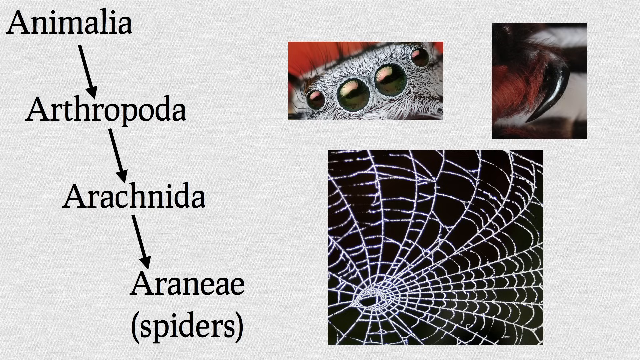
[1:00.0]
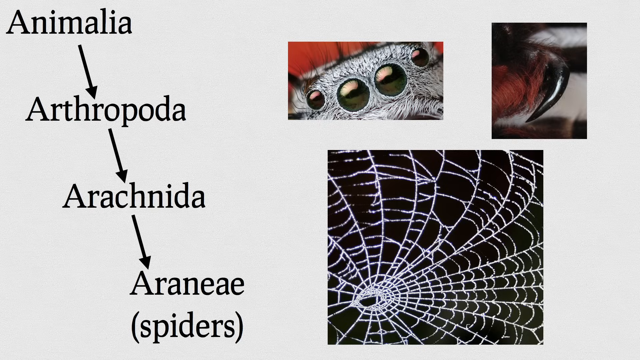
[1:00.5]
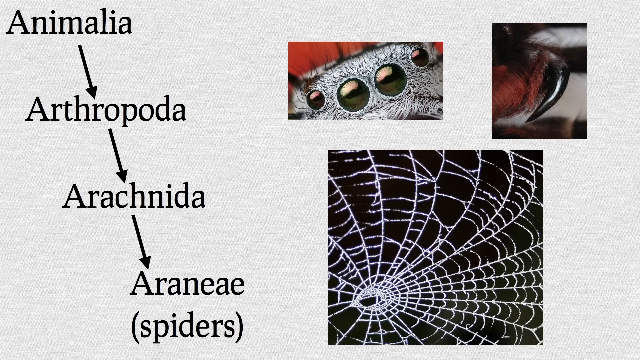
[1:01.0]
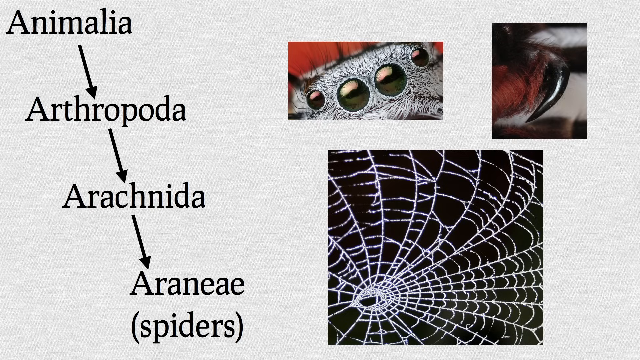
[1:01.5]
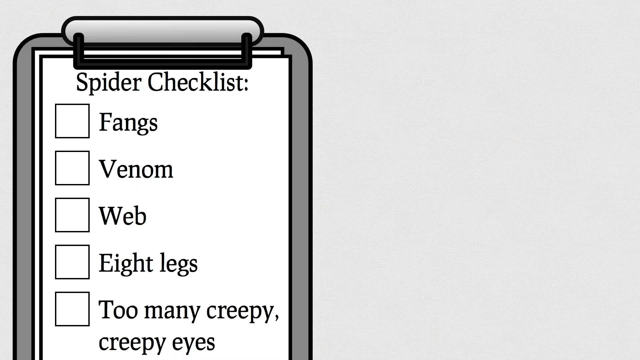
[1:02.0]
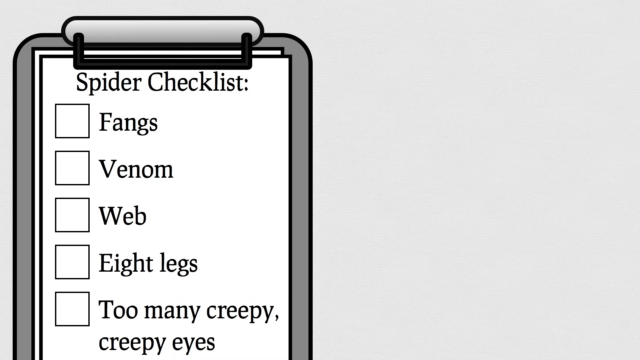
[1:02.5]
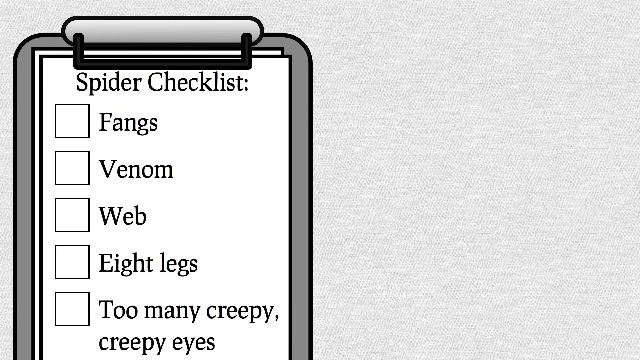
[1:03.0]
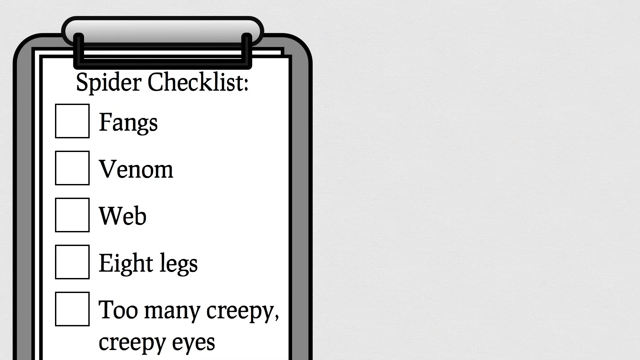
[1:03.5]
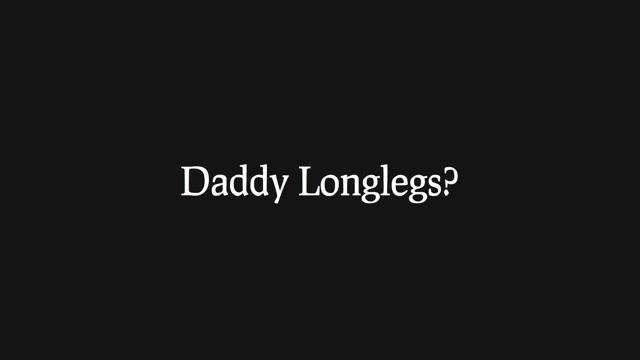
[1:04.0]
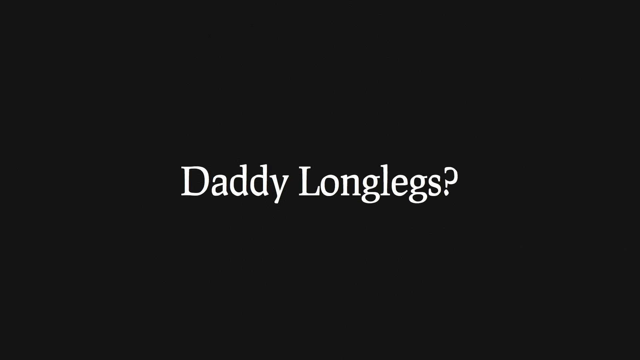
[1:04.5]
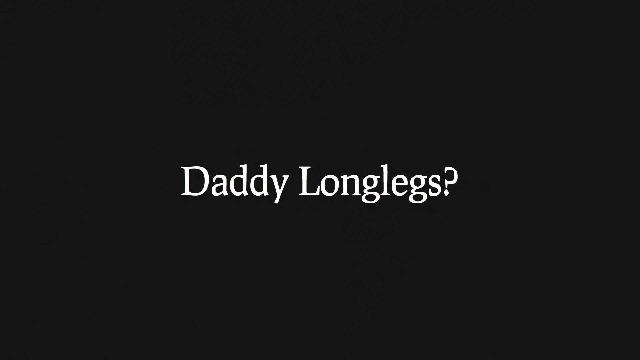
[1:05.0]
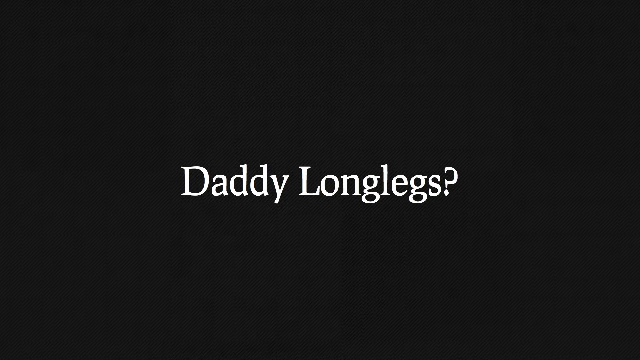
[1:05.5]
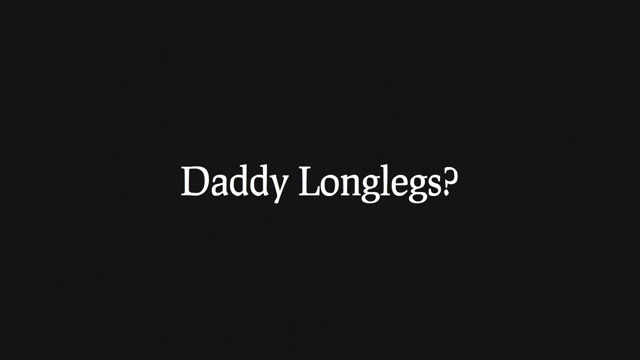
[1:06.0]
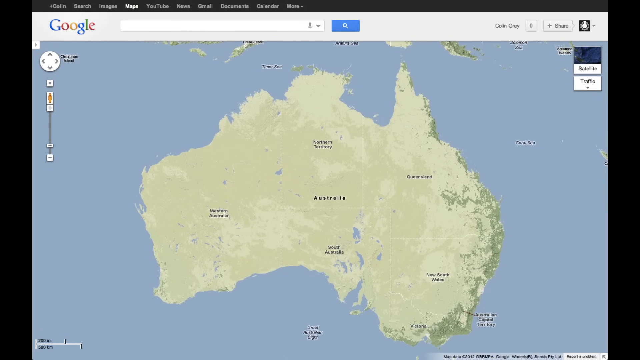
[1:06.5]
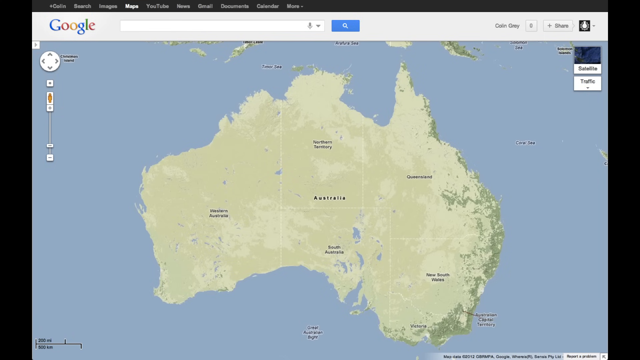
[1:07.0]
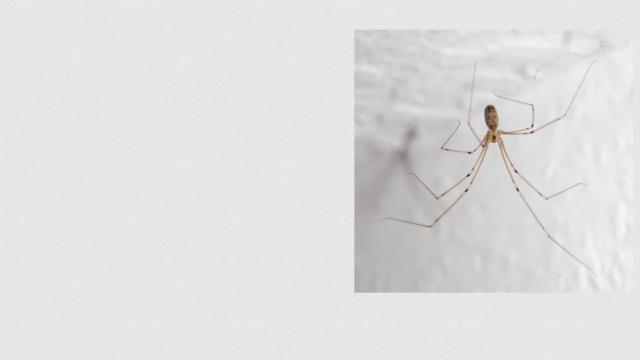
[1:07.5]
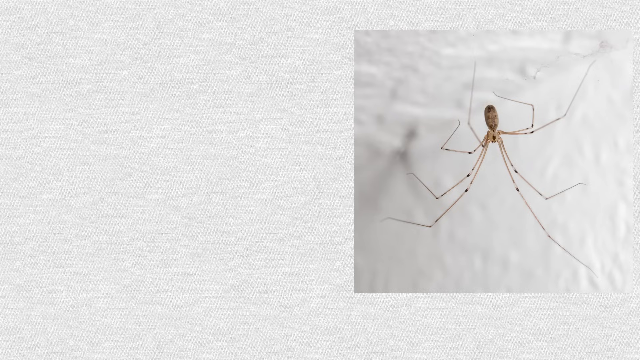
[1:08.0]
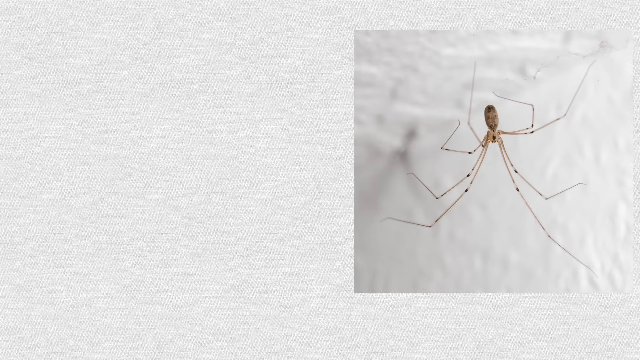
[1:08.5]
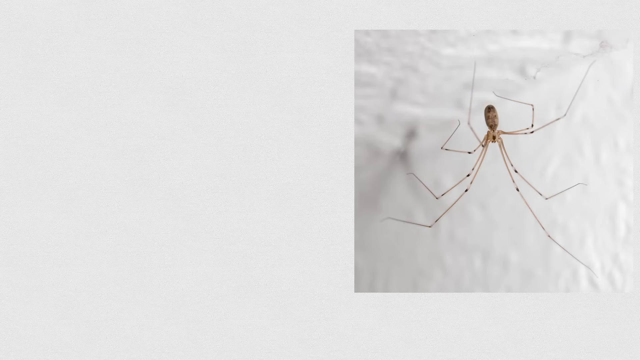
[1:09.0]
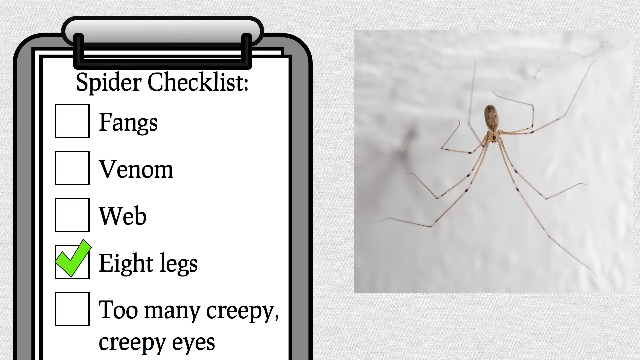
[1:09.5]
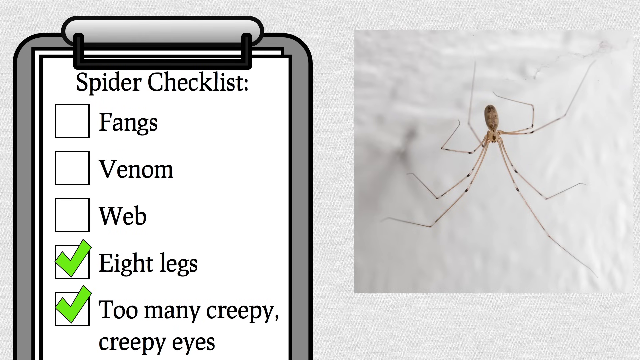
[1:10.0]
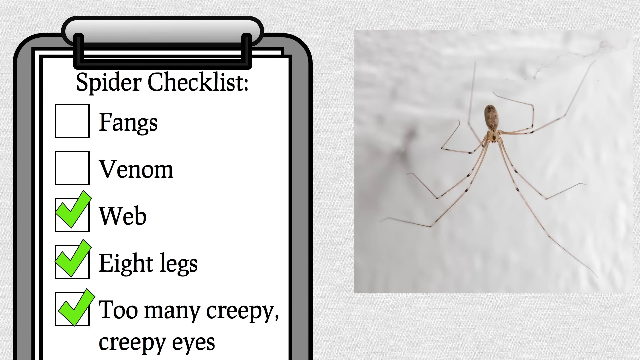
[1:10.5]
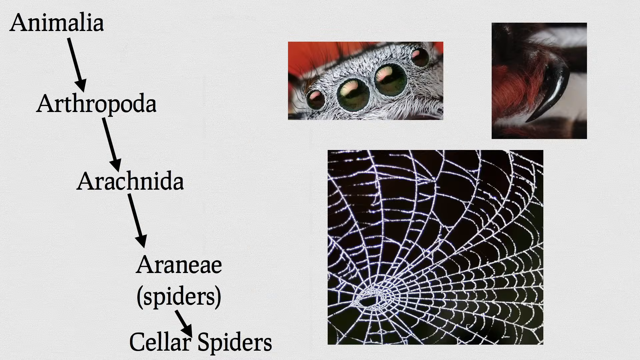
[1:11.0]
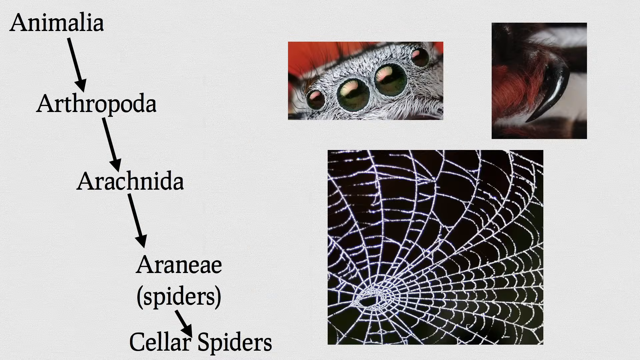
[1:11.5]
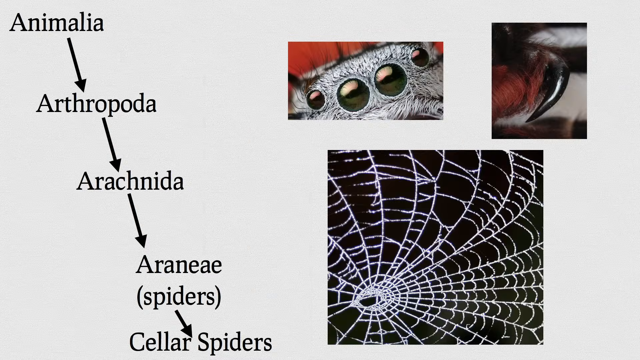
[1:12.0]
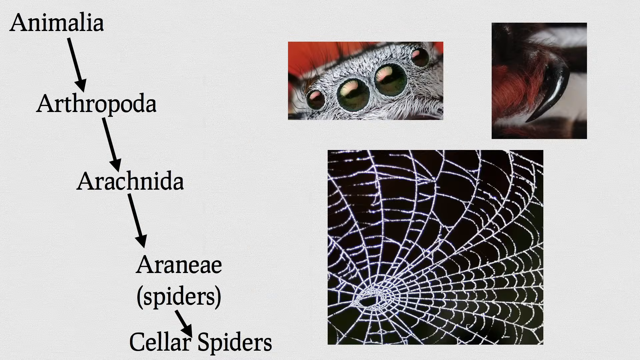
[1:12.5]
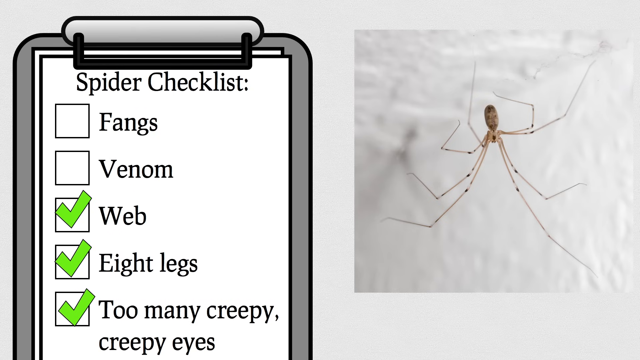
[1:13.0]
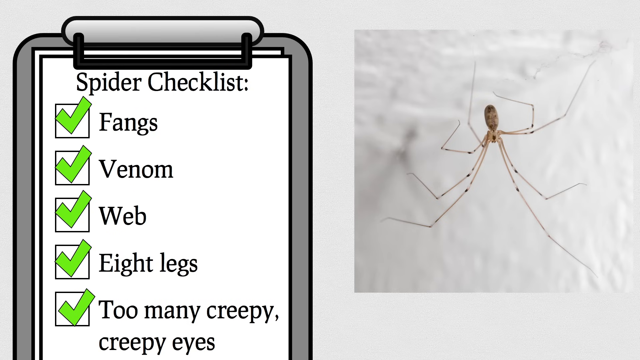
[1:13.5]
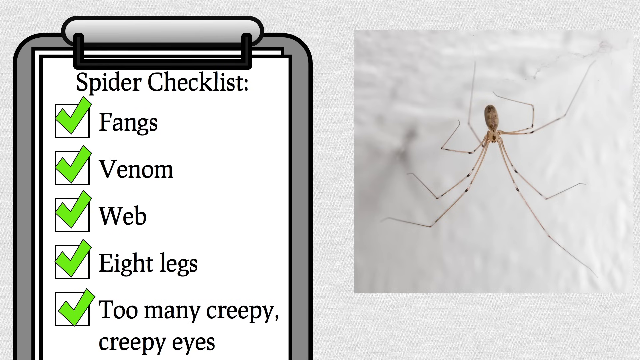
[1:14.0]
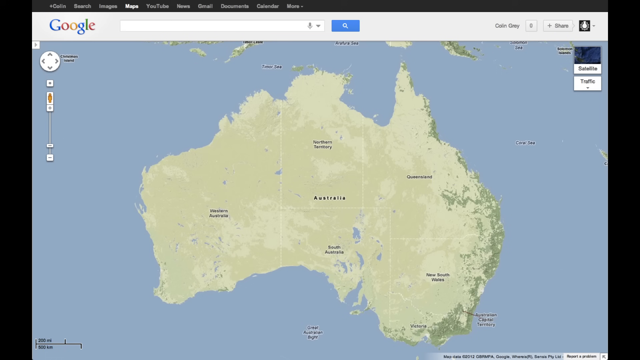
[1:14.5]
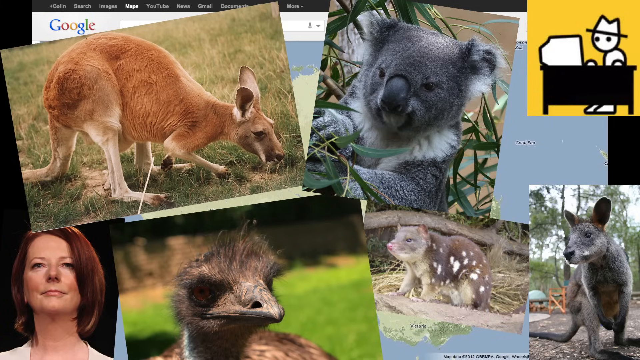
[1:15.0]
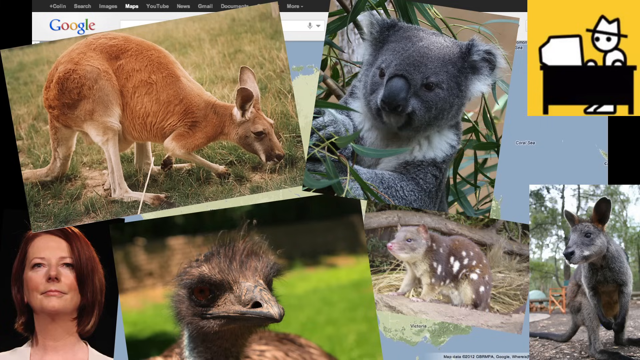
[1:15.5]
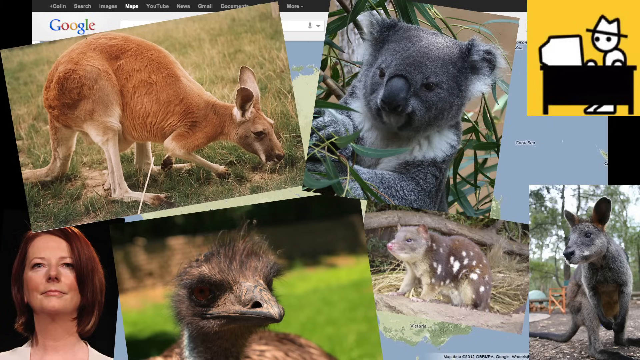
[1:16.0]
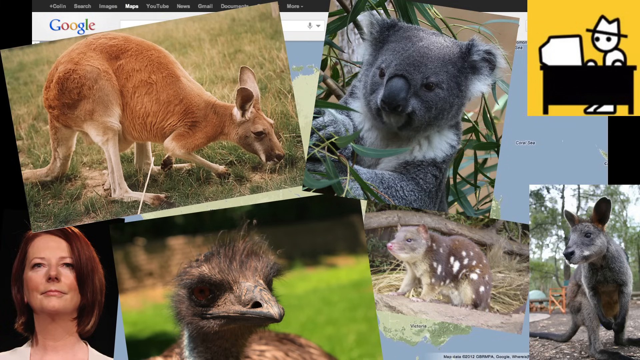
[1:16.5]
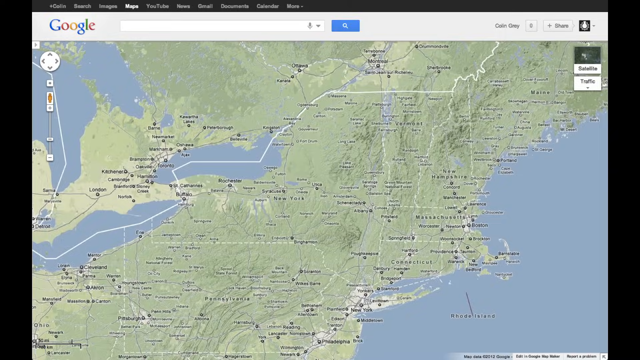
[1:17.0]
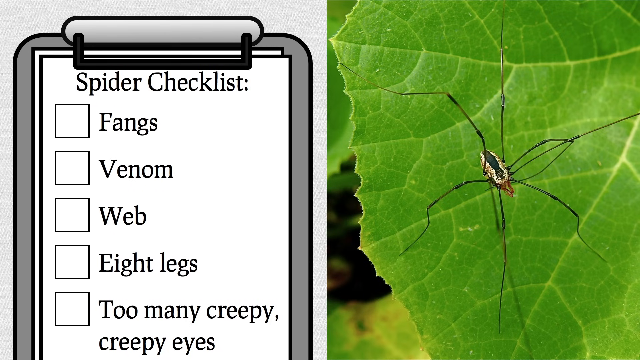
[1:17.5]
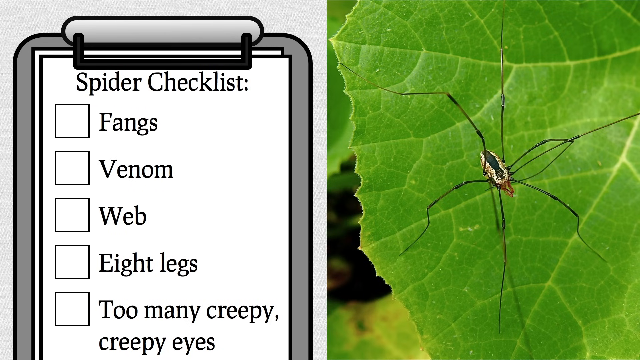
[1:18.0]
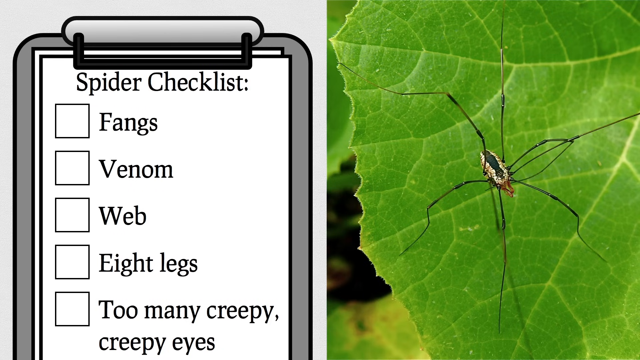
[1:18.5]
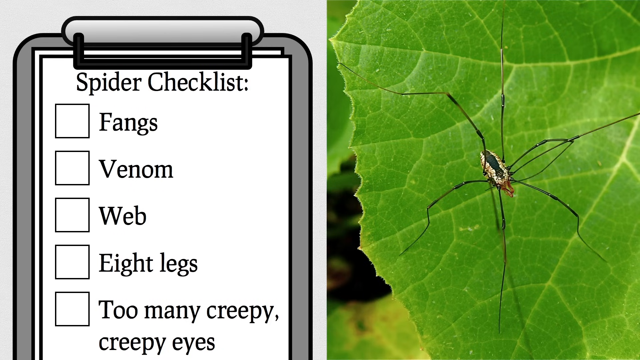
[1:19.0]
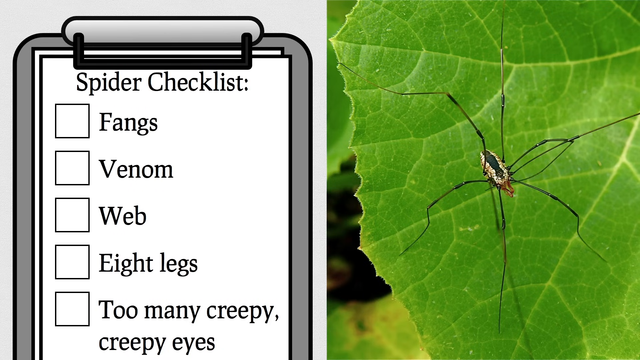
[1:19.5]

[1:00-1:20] The title page with the classifications from Animalia to Aranae remains, with three images on the right: the spider with the four eyes, a black fang with red hair, and a black and white image of a spider web. Next is a spider checklist with a check board on the left listing fangs, venom, a web, eight legs, and "too many, too creepy". A black title screen follows with white writing that says "daddy long legs?" Then a world map view of Australia transitions into a white photo with what appears to be a long-legged creature on the right-hand side, brown with small spots, on the white background. The boxes for eight legs, too many too creepy, and a web are checked, but nothing else. The video returns to the page with the classifications and the three images, and when it goes back to the page with the check board and the long-legged creature, the remaining boxes, fangs and venom, are checked off. Then comes the map of Australia, followed by numerous images, such as a kangaroo eating, a koala eating, and four other unidentified animals in the wild. Next is a photo of another, unidentified part of the world, and then what seems to be some type of animal on a leaf, with the spider checklist and check board on the left-hand side.